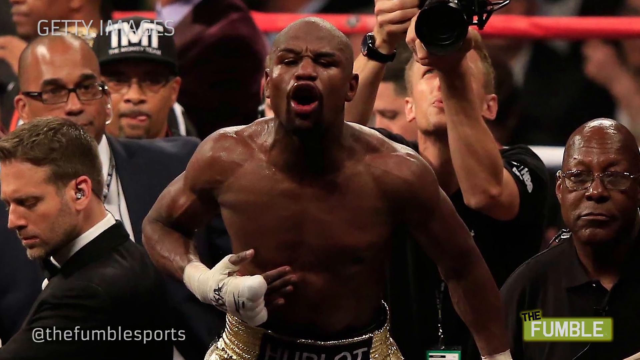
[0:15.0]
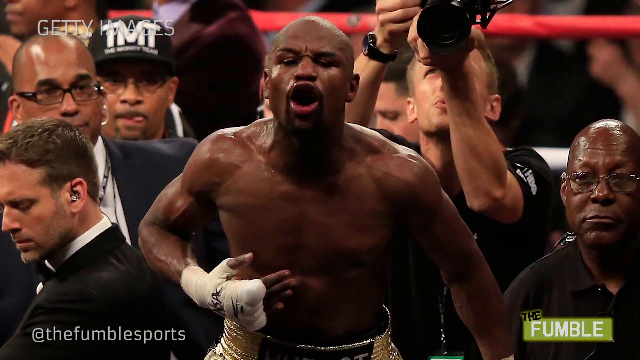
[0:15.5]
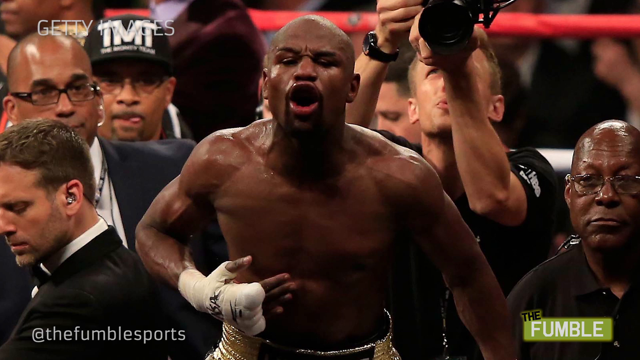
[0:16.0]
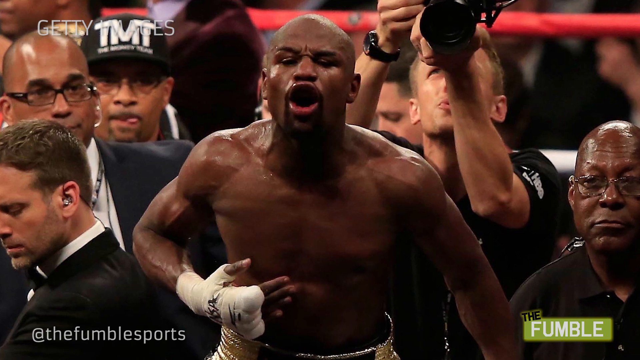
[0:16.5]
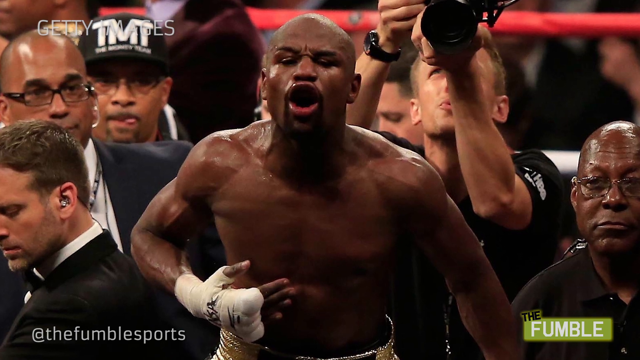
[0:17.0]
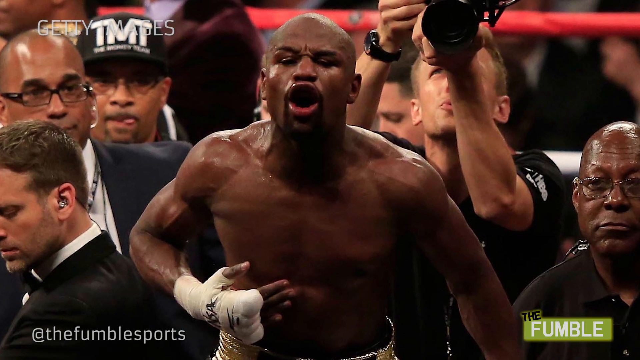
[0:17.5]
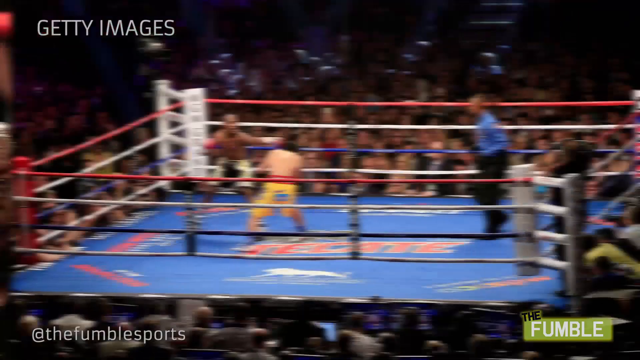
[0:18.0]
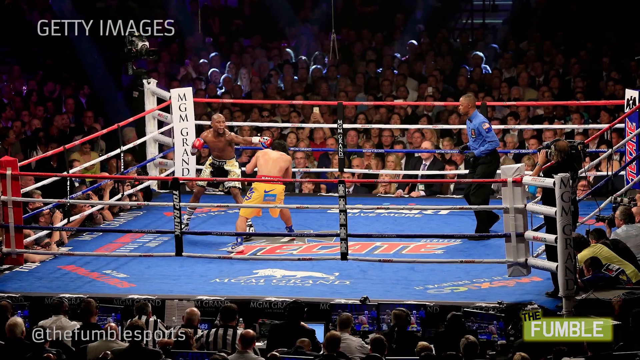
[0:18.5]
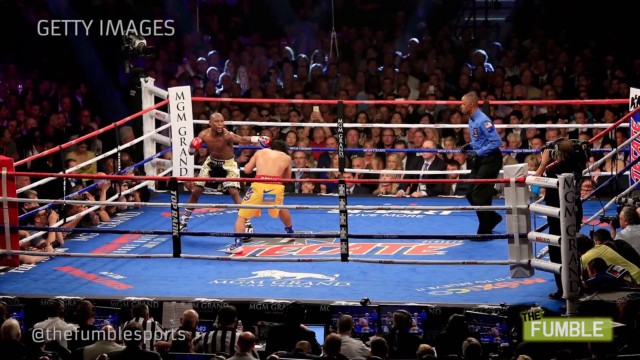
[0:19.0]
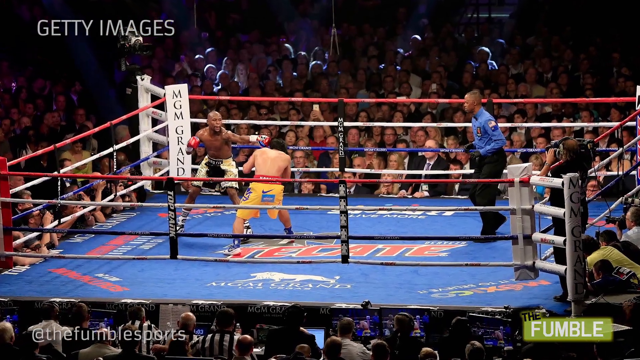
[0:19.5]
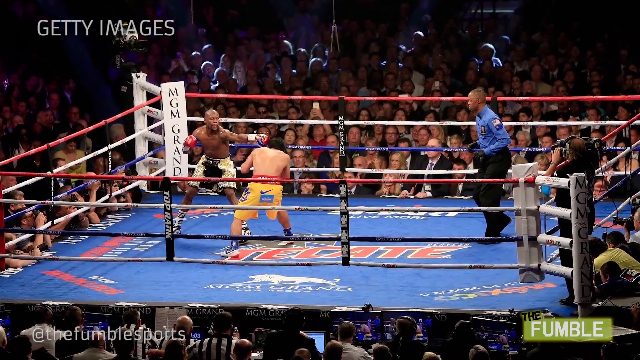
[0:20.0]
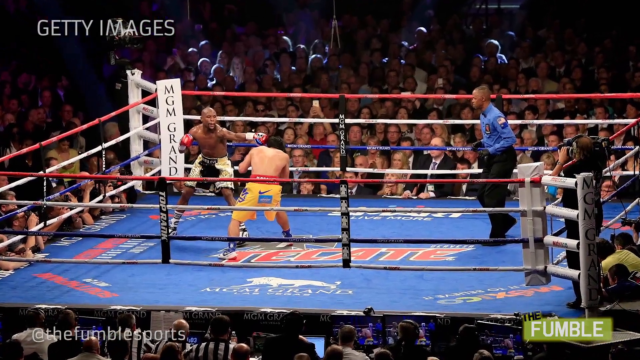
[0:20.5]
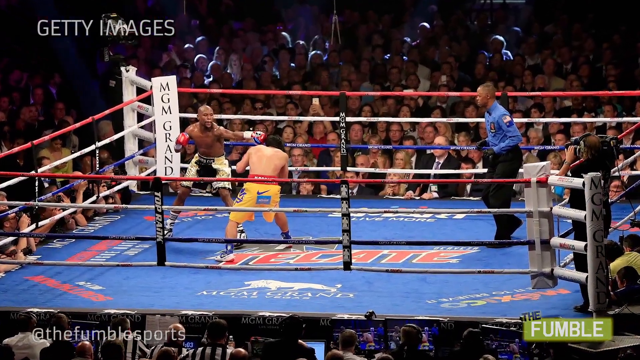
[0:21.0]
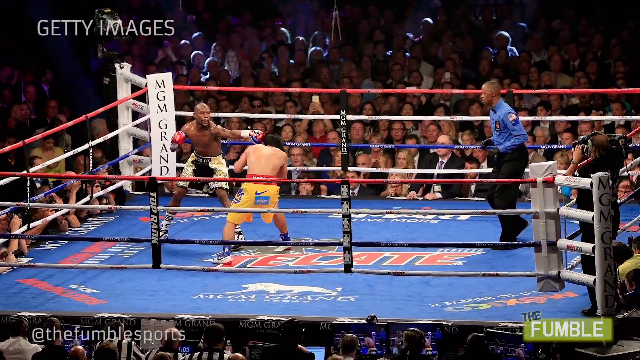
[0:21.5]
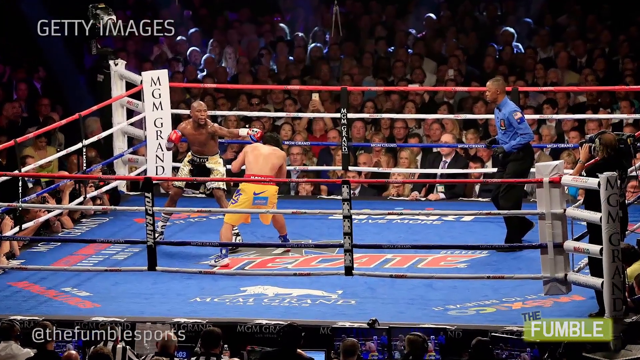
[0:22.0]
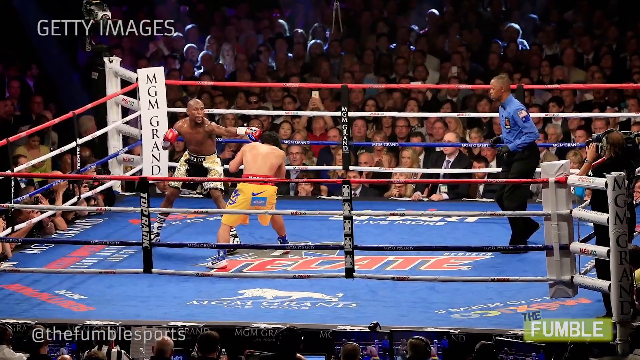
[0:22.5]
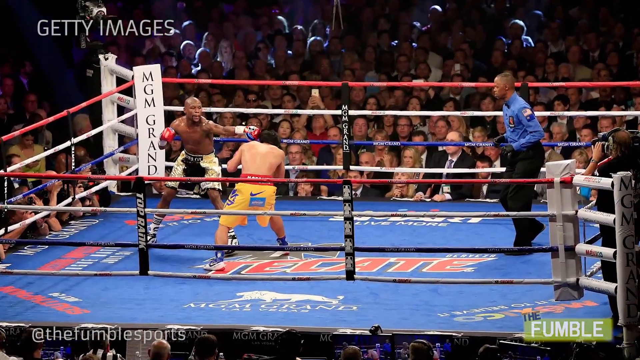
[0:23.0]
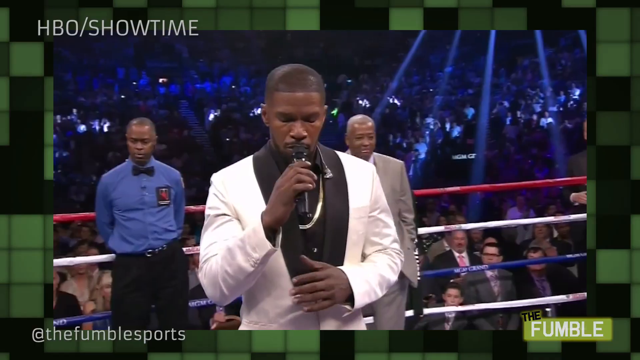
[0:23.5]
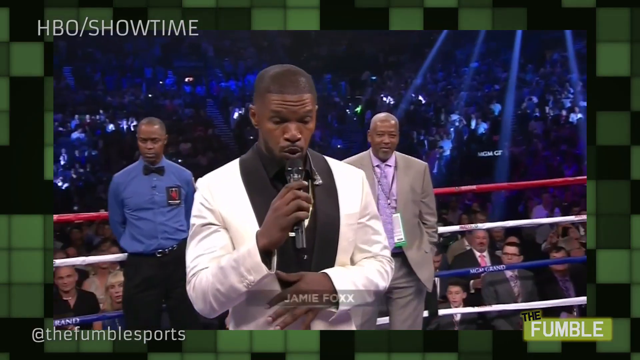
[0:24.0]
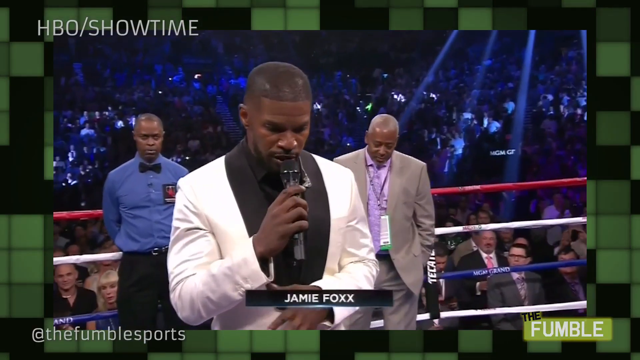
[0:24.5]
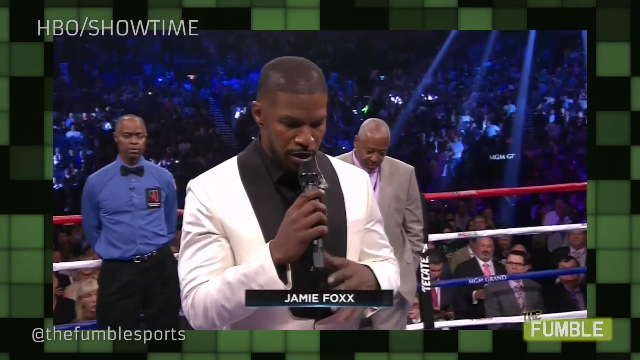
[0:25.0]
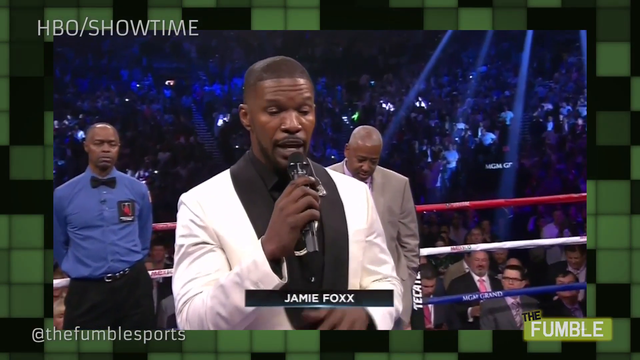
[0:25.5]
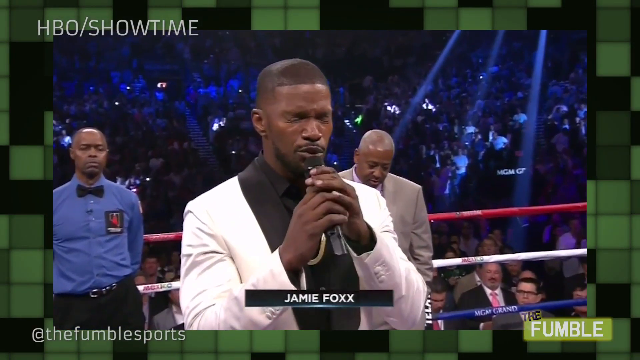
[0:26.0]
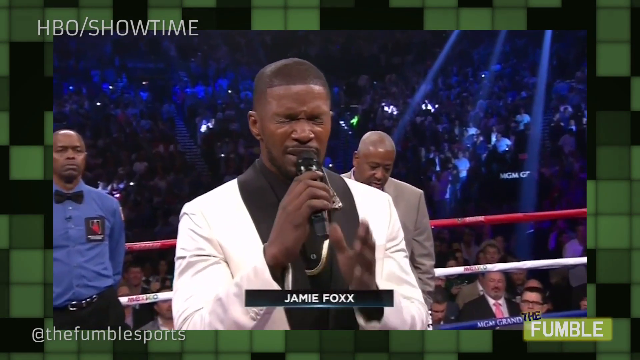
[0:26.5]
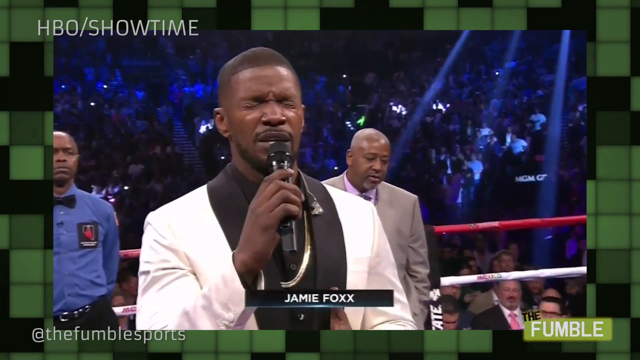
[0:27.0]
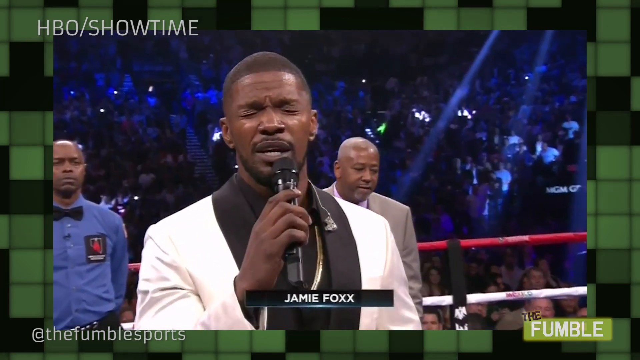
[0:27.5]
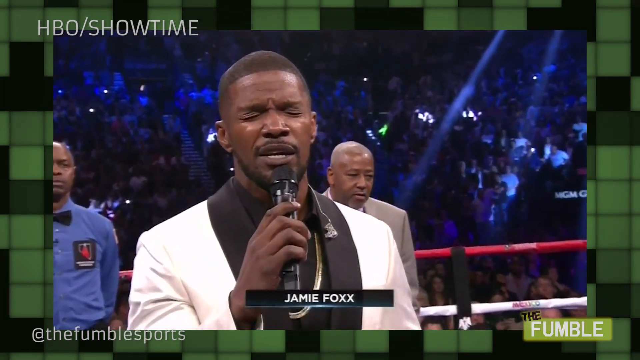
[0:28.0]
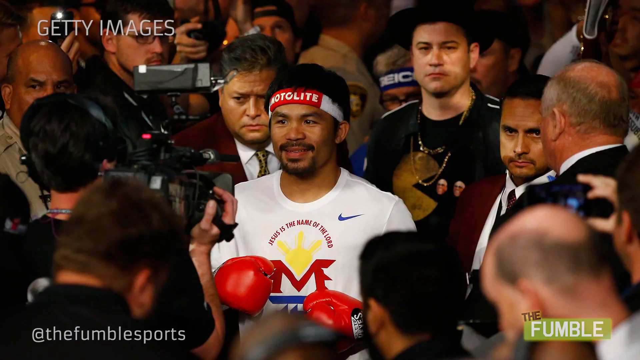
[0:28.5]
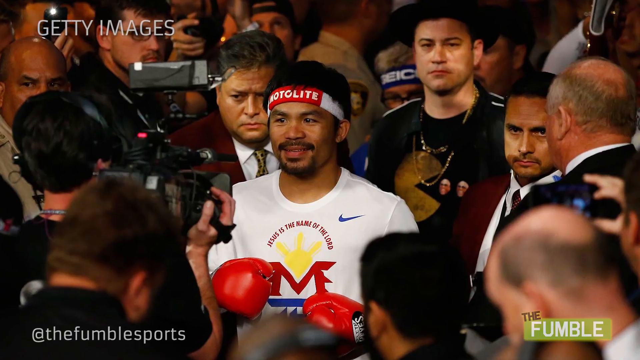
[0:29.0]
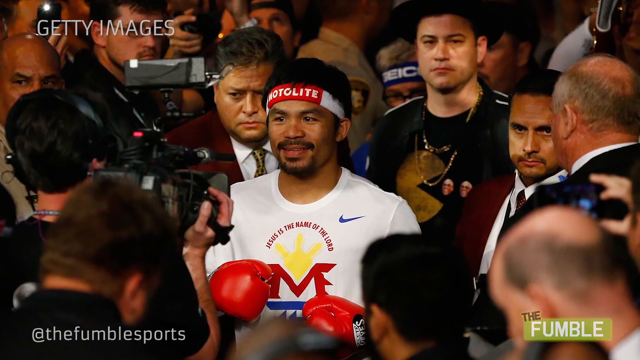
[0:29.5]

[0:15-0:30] A still photograph shows a black male boxer with his hands wrapped, dressed in shorts suited to a prime-time boxing match. He has visible sweat on his body, and his mouth is wide open as though he is shouting. He is surrounded by cameramen and other crew or TV members. The scene changes to a wide-view photograph of a boxing ring with two boxers in it, a black male and a white male, and a ref in the ring with them. A large crowd of people is around the edges, and a cameraman is filming with a large camera suited to a TV show. Next comes live video footage of a black male presenter in a white suit holding a microphone, with a name title underneath him that says "Jamie Fox"; he looks like he is singing into the microphone. Another still photograph follows, showing the famous boxer Pacquiao wearing a Nike t-shirt and his red boxing gloves, surrounded by people, with a cameraman in front of him.